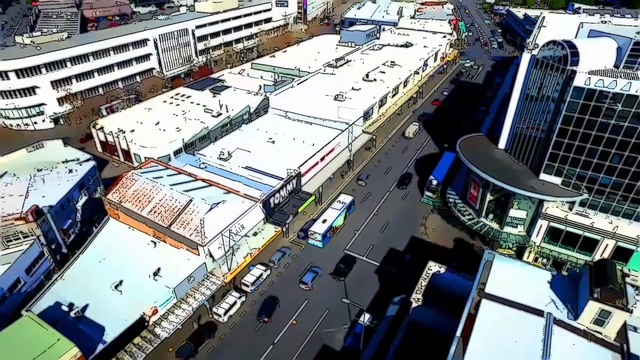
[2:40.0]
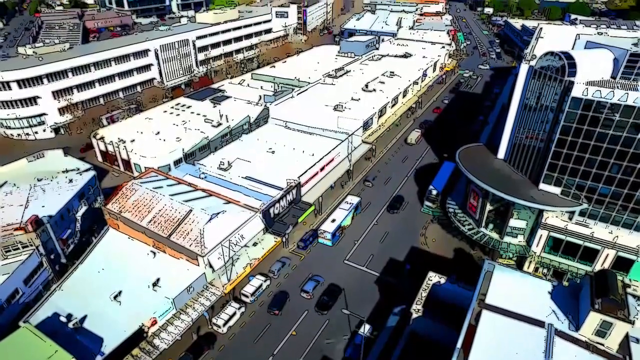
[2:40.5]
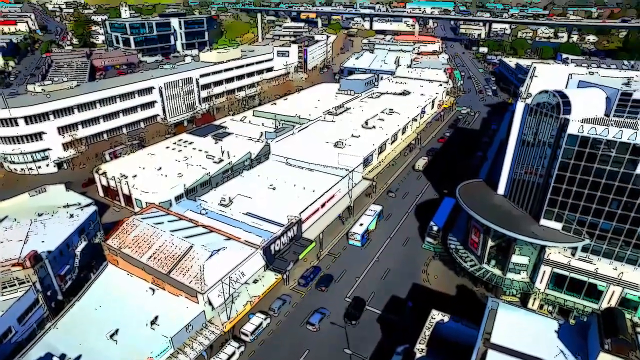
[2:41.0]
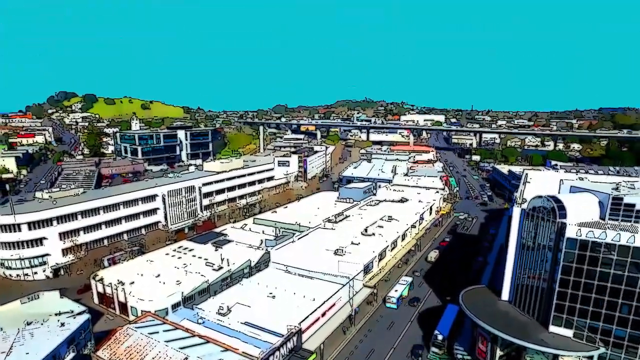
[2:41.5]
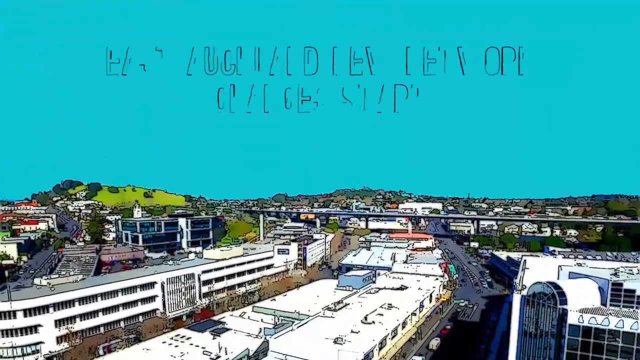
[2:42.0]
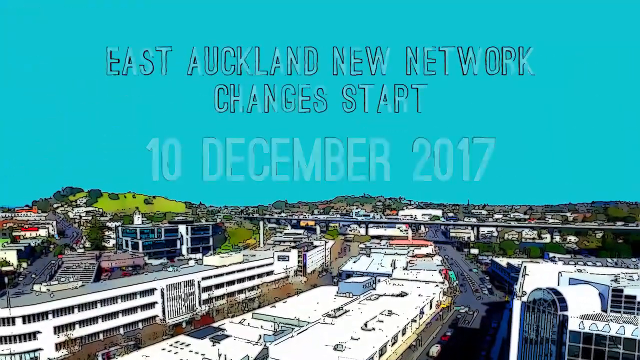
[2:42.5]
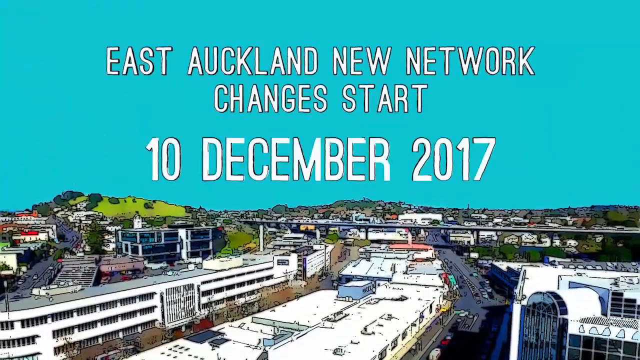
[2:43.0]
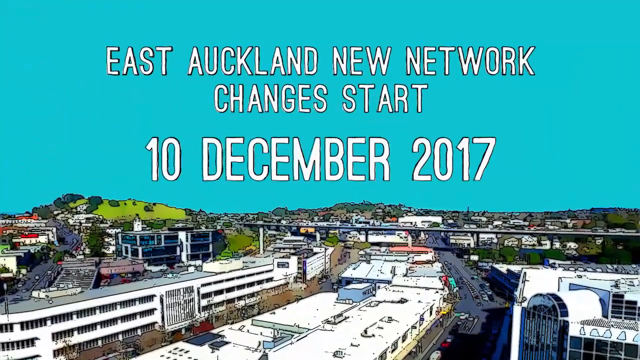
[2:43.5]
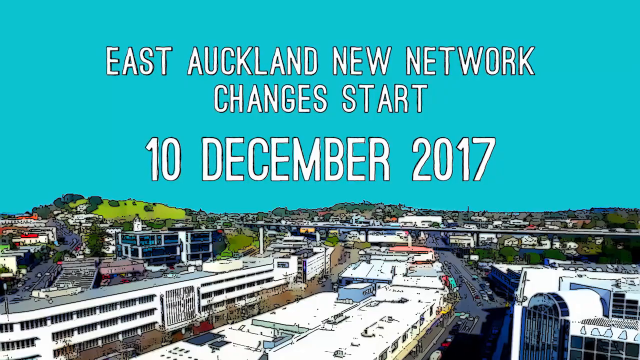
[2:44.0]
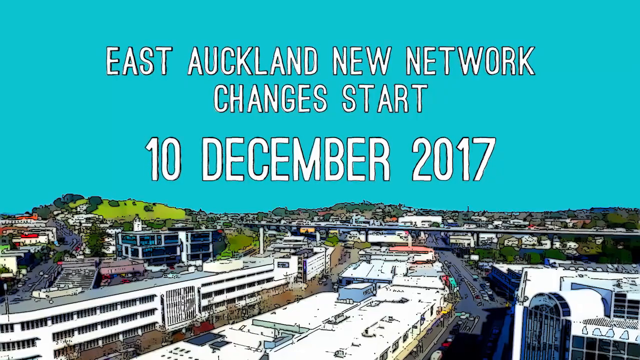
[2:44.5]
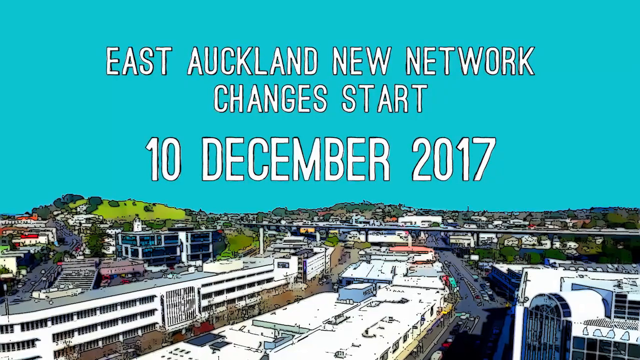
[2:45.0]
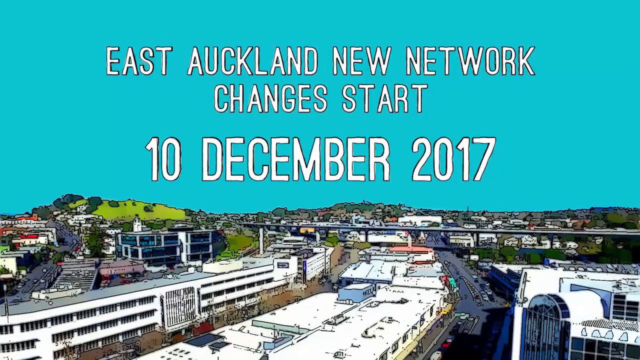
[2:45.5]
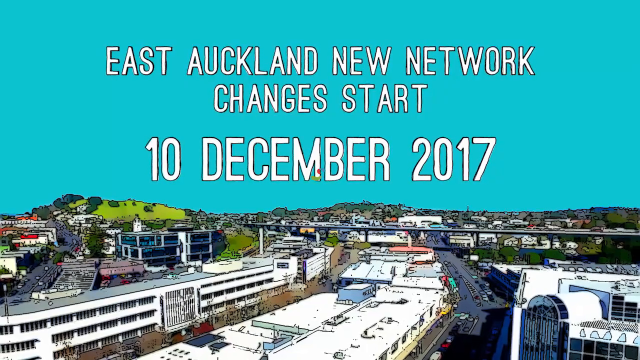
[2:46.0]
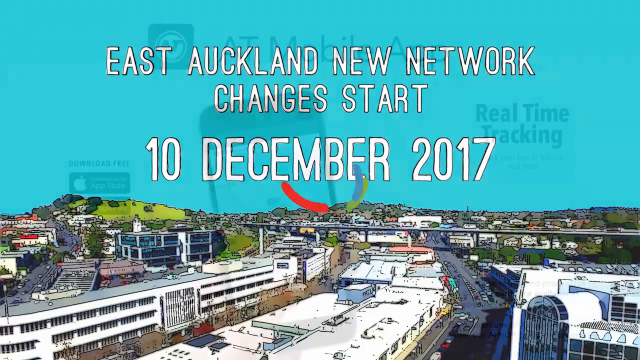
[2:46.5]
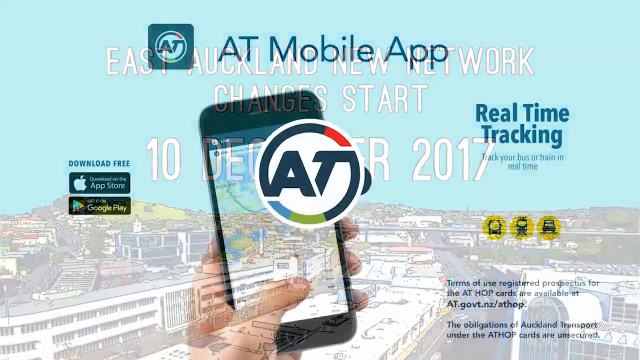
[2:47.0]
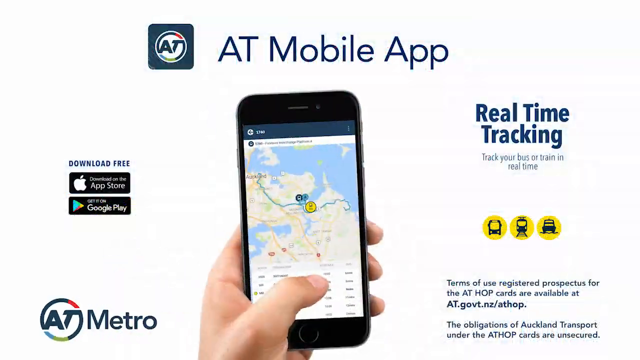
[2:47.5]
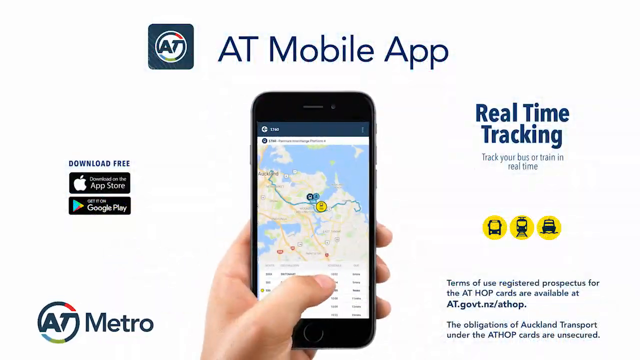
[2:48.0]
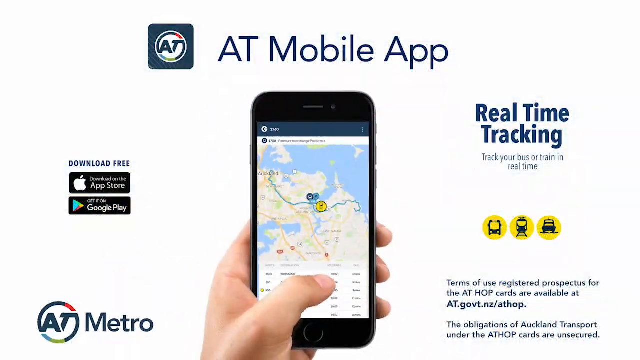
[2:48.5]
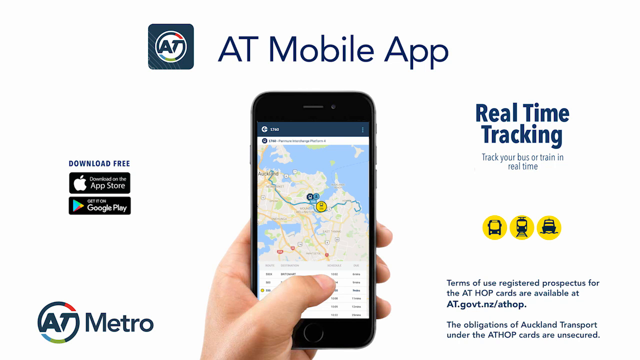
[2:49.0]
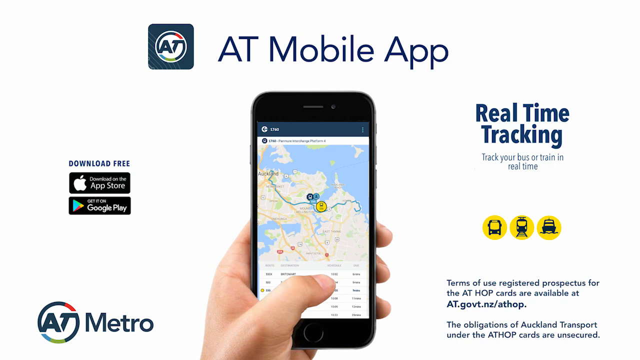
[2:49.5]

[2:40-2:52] An aerial shot shows the AT bus from above, moving through a busy retail area, and the camera pans to show the far distance against a blue sky. The title "East Auckland new network changes. Start 10th of December 2017" appears. A loading image of the AT logo follows, then a person's hand holding a mobile phone with the AT mobile app loaded. On the left-hand side the screen says "download free on the Apple Store and Google Play", and on the right-hand side "real time tracking, track your bus or train in real time", with the terms at the bottom. The video ends.